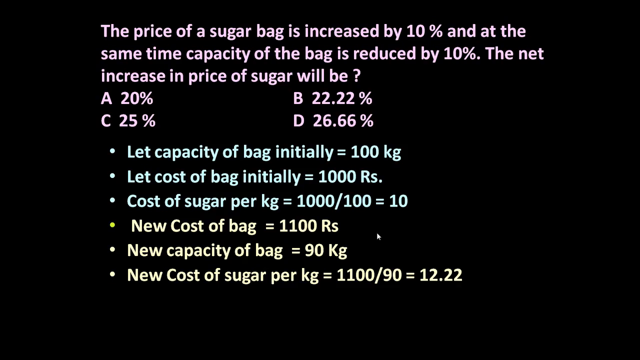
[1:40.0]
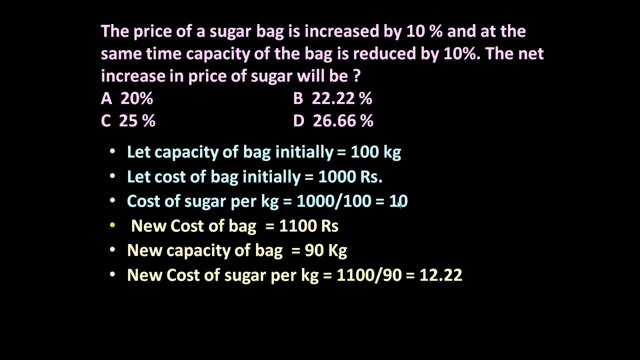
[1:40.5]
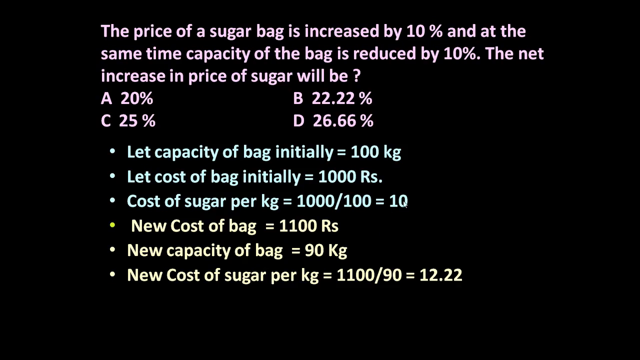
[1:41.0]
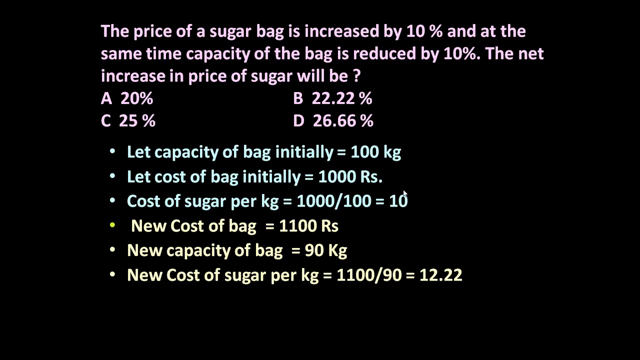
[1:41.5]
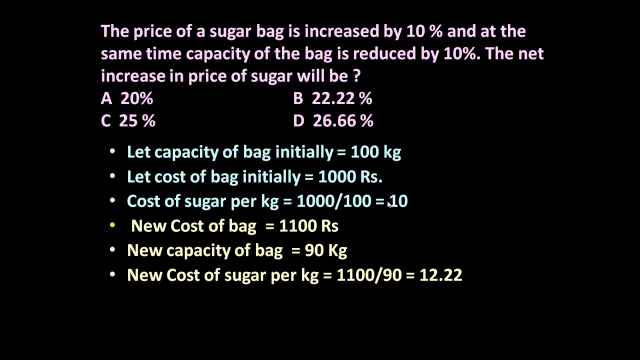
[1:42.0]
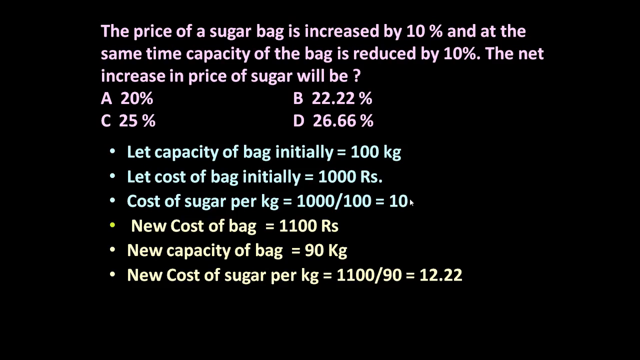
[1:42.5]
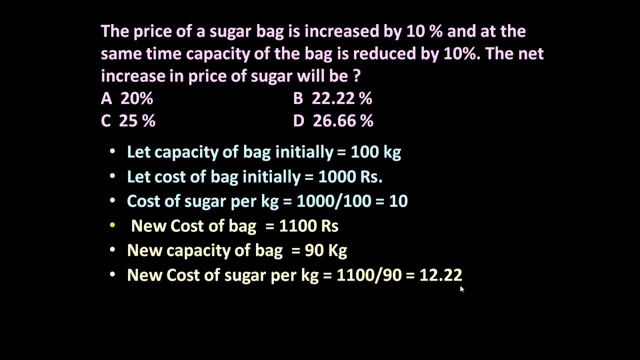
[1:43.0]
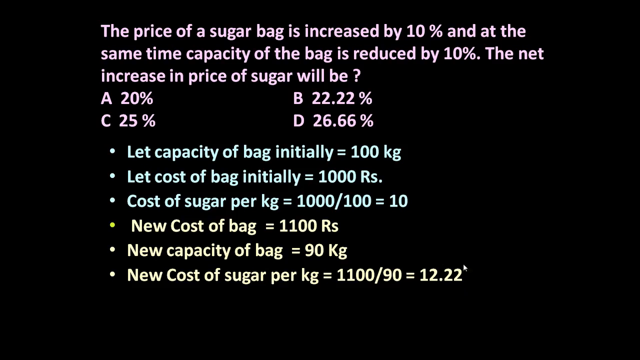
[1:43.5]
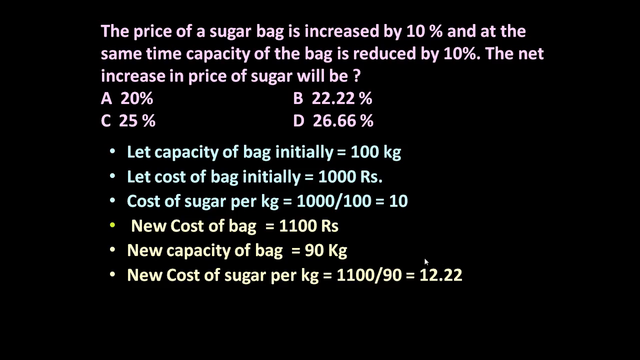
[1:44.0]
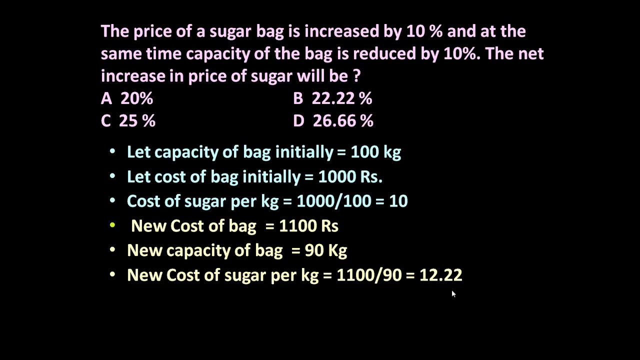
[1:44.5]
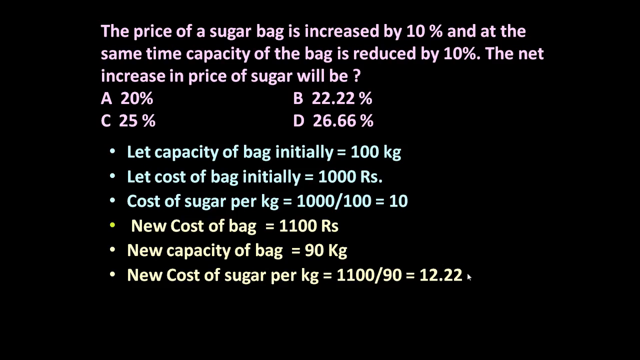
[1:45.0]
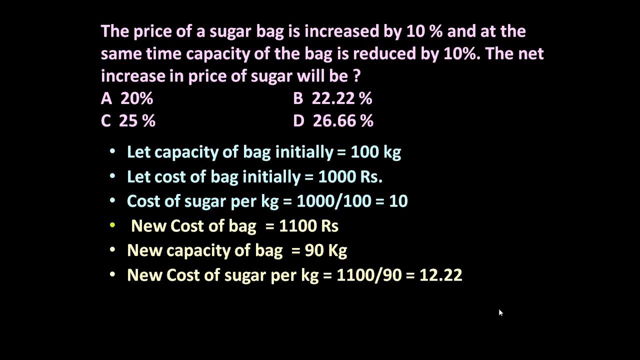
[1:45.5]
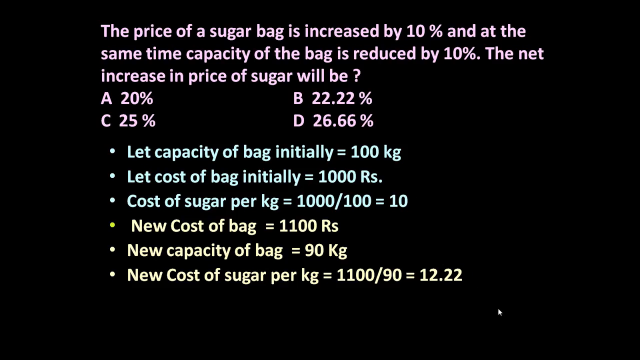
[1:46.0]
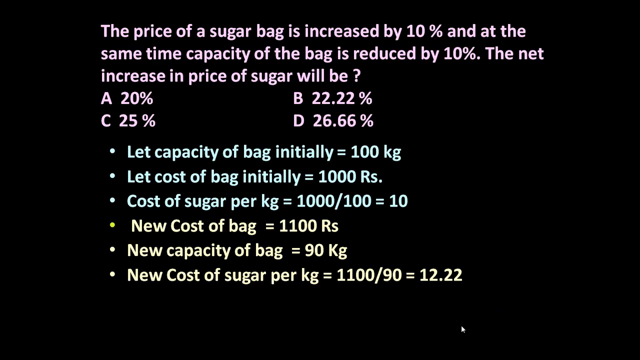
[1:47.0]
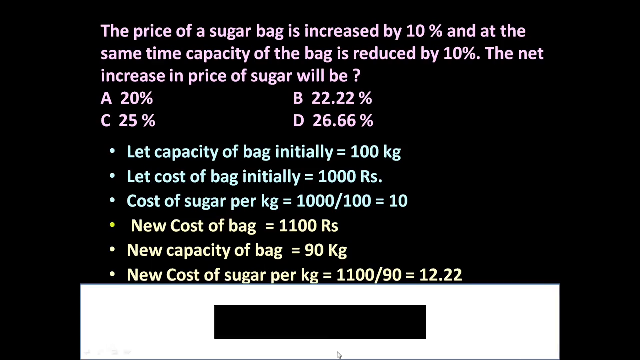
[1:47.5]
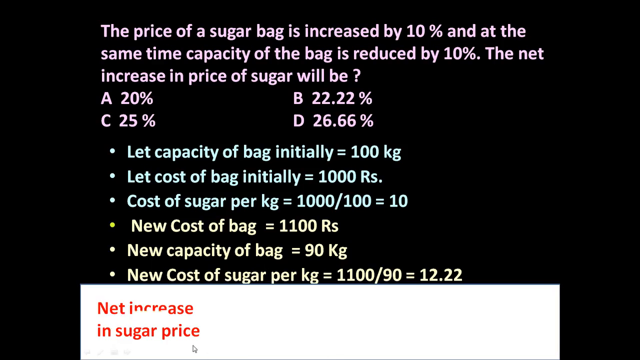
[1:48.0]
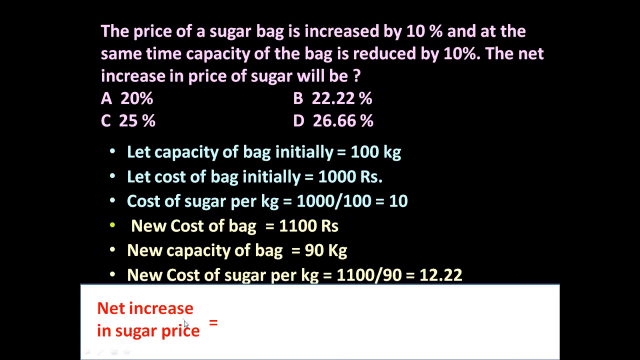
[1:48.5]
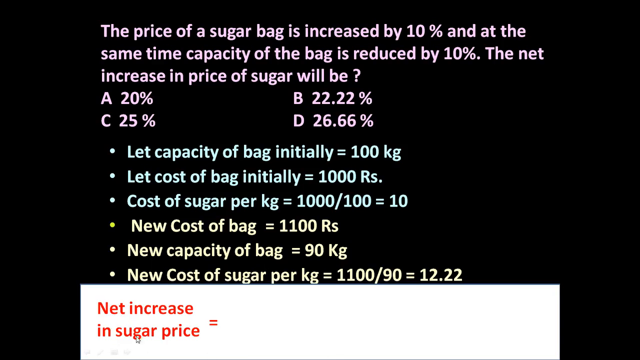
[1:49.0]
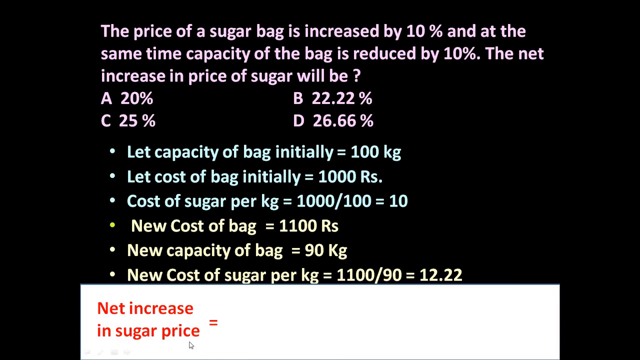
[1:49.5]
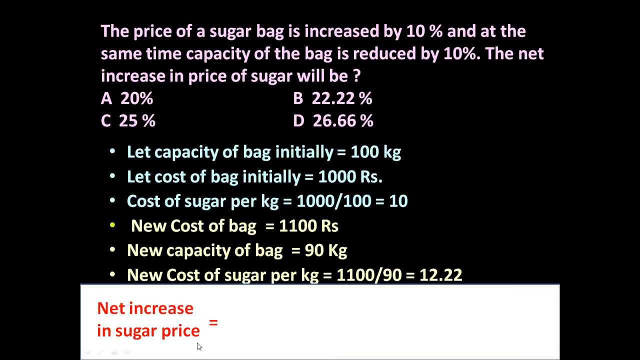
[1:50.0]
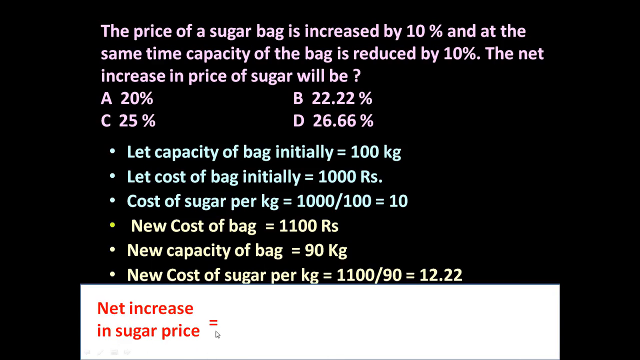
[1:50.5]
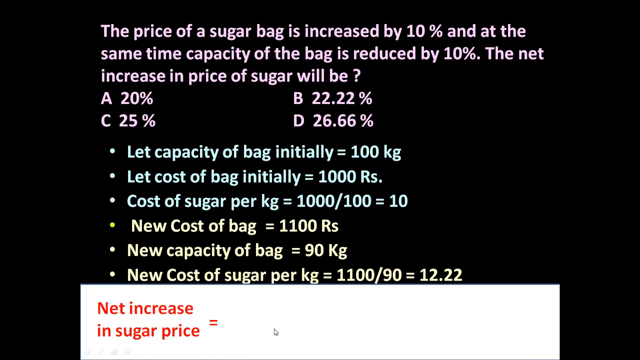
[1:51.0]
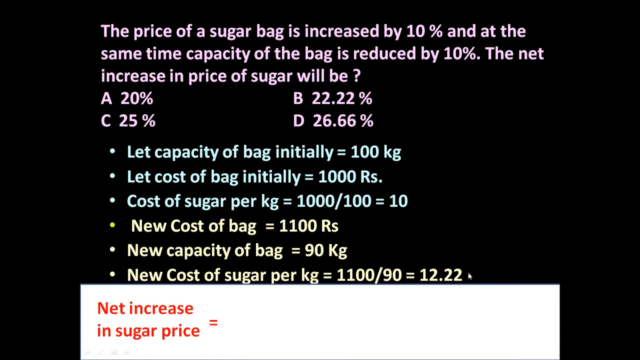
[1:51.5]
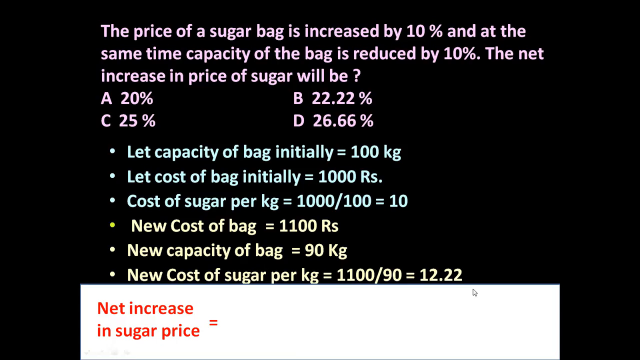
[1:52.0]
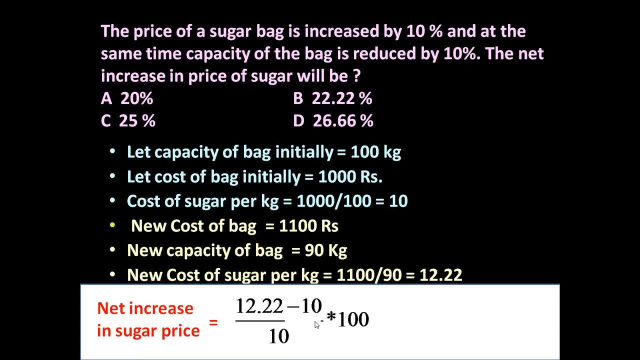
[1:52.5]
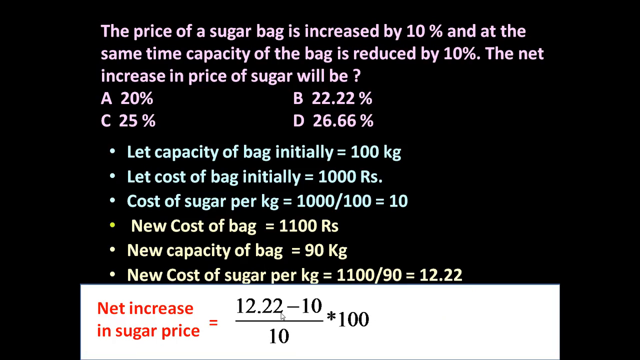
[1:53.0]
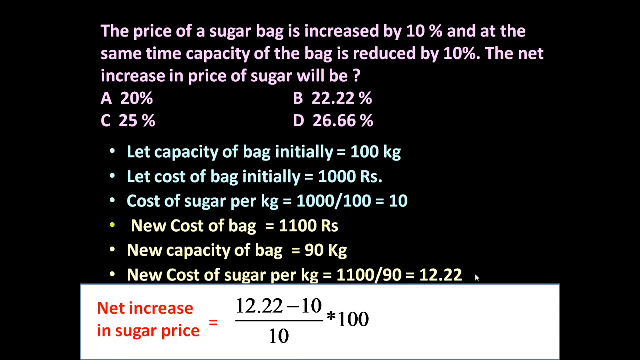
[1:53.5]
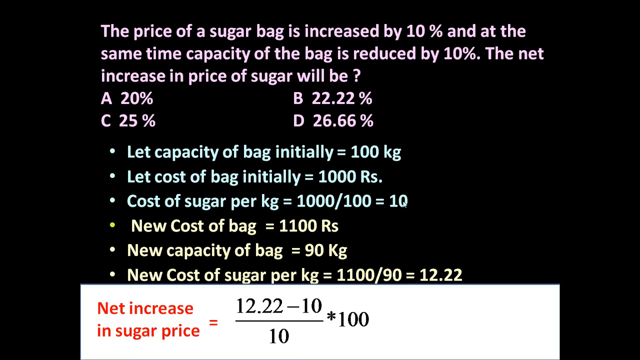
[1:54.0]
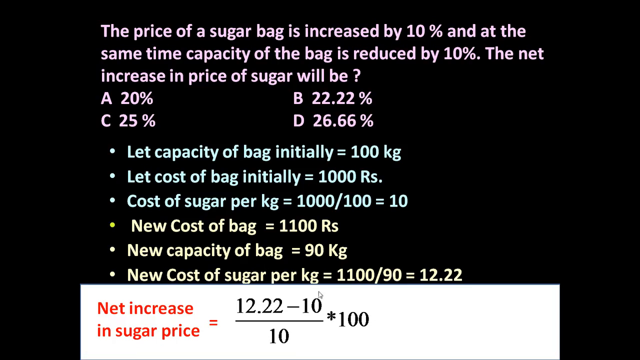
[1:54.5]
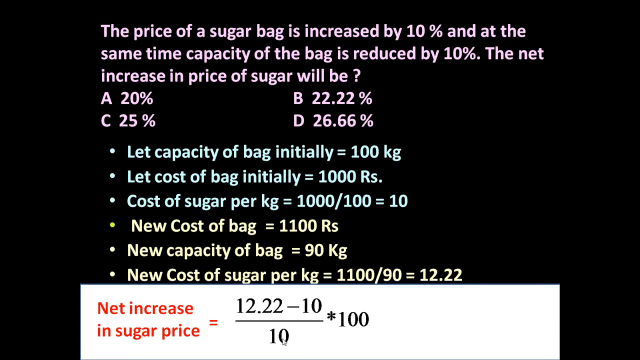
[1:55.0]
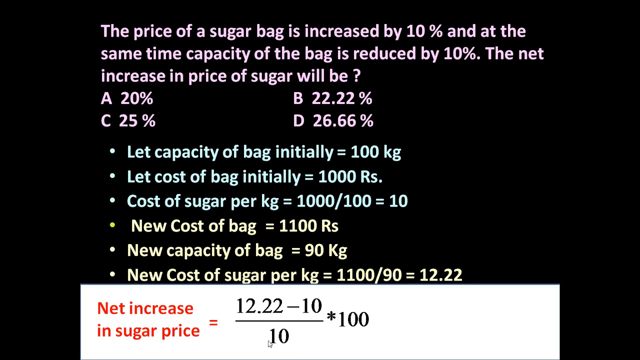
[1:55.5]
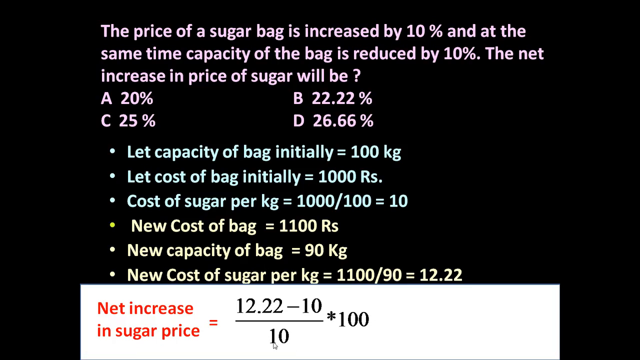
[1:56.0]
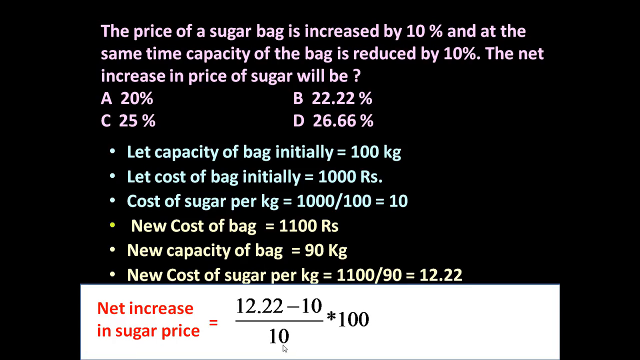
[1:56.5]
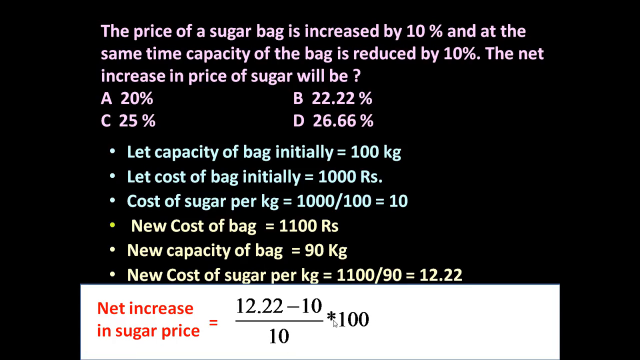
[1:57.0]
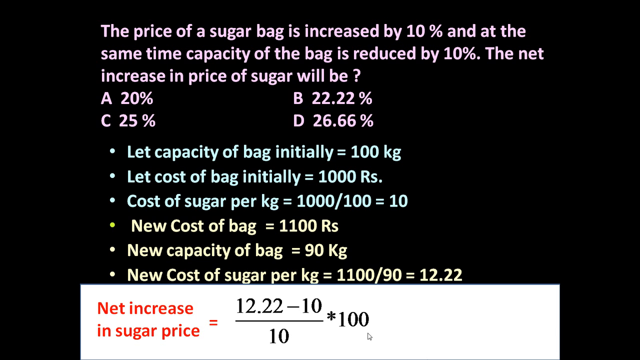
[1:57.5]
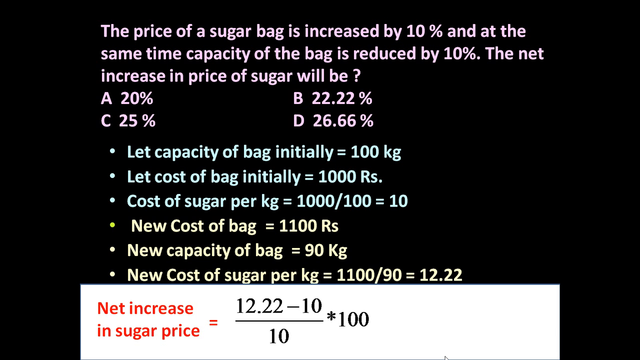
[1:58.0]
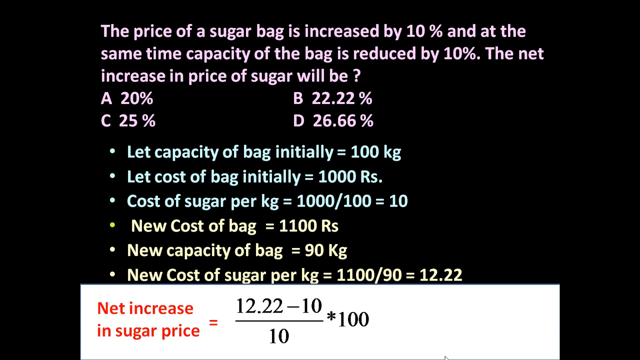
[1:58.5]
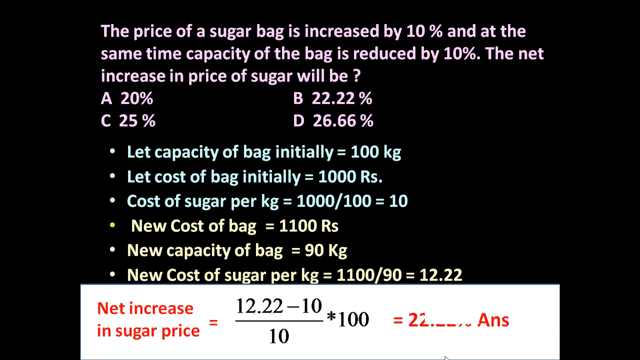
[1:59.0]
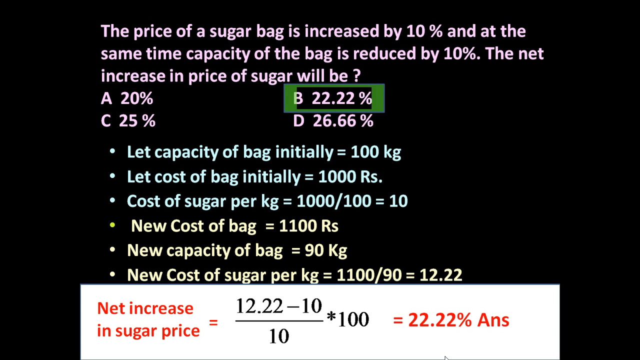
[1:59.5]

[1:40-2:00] The cursor first hovers around the 10 in the third bullet point line of the answer, which reads "cost of sugar per kg equals 1000 over 100 equals 10," then jumps to the last bullet point line, which reads "new cost of sugar per kg equals 1100 over 90 equals 12.22." The cursor circles the 10 and the 12.22 in a counterclockwise motion, drawing attention to the cost of sugar per kg changing from 10 to 12.22. A white box is then animated onto the bottom of the screen under the last bullet point, and its text fades in word by word from left to right. First, "net increase in sugar price equals" appears in orange text on the left side of the screen. Then a mathematical formula in black shows 12.22 minus 10 in the numerator of a fraction and 10 in the denominator, with a star sign indicating multiplication by 100 to the right, followed by "equals 22.22% ANS" on the right side of the screen in orange, indicating the answer is 22.22%. A green highlight is then animated onto answer choice B near the top of the screen.